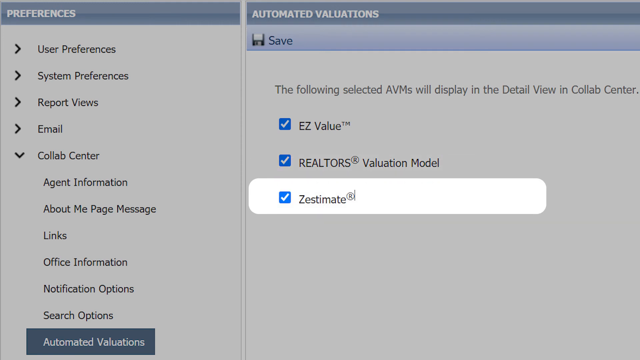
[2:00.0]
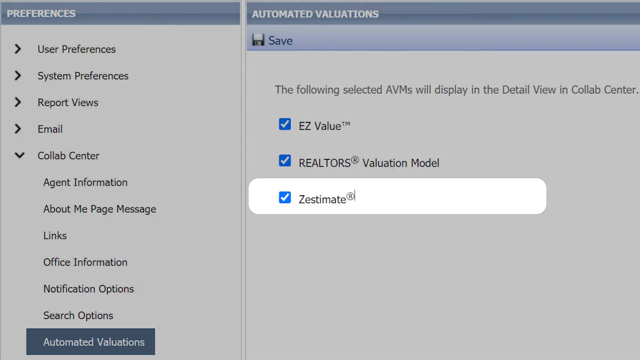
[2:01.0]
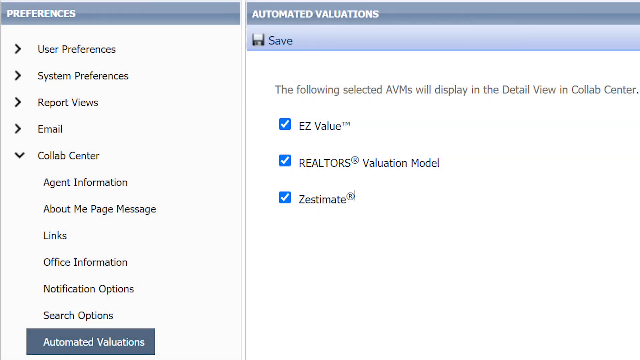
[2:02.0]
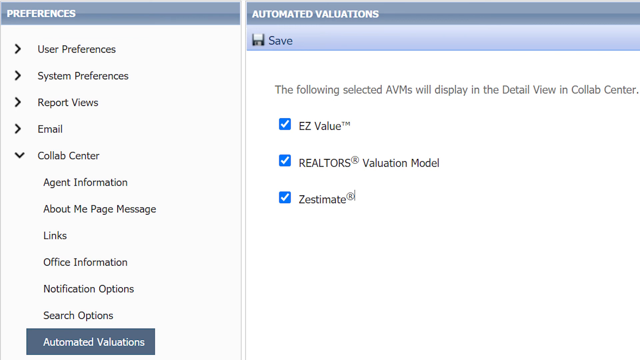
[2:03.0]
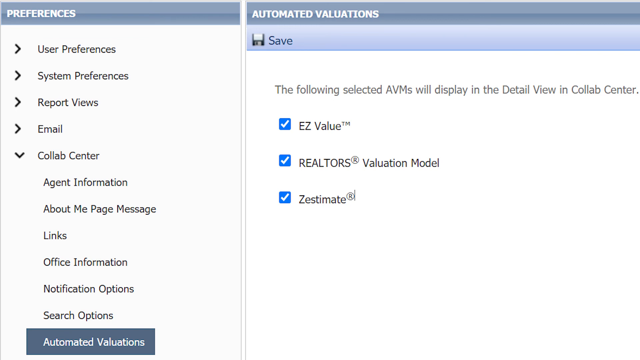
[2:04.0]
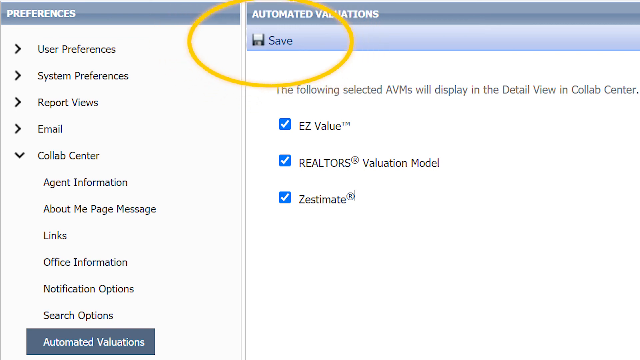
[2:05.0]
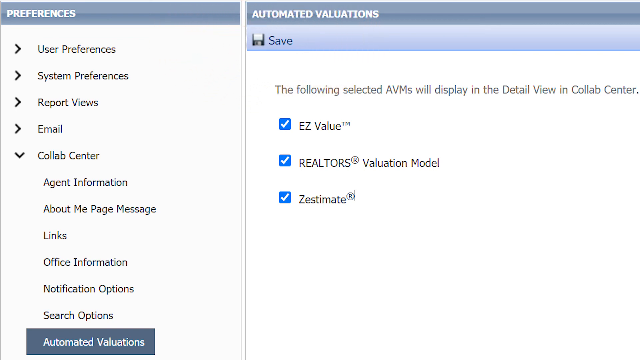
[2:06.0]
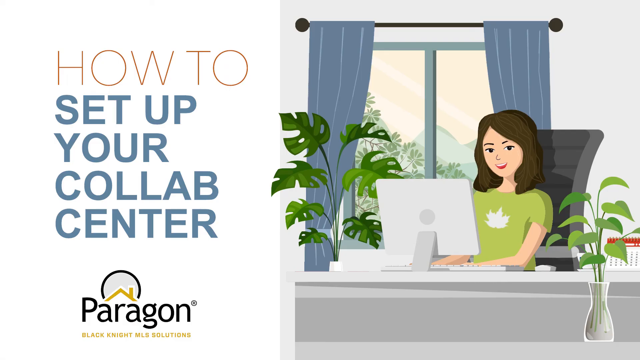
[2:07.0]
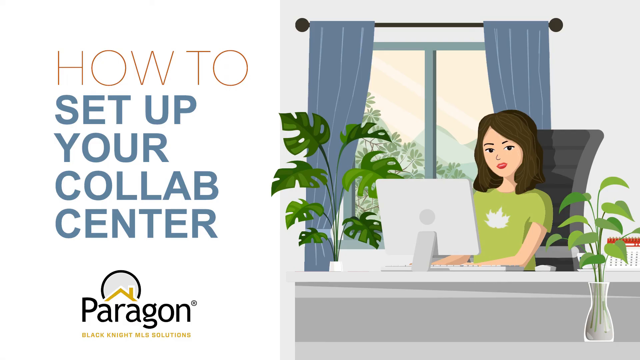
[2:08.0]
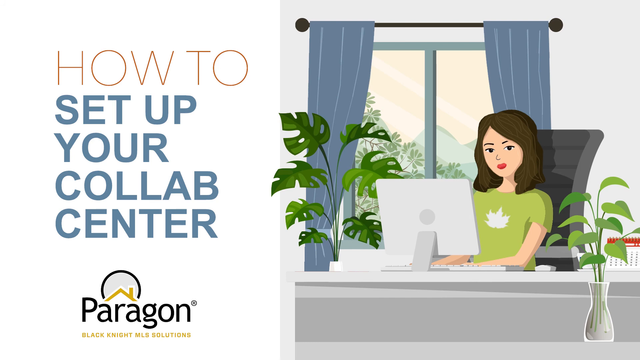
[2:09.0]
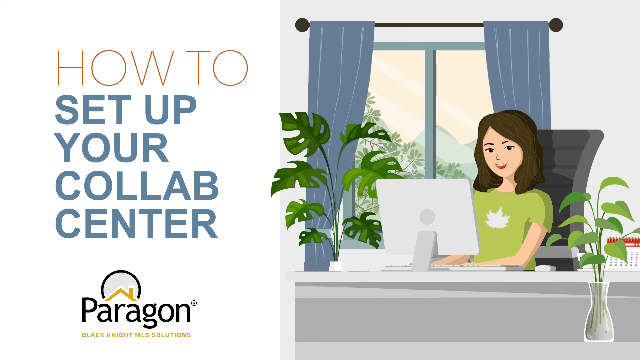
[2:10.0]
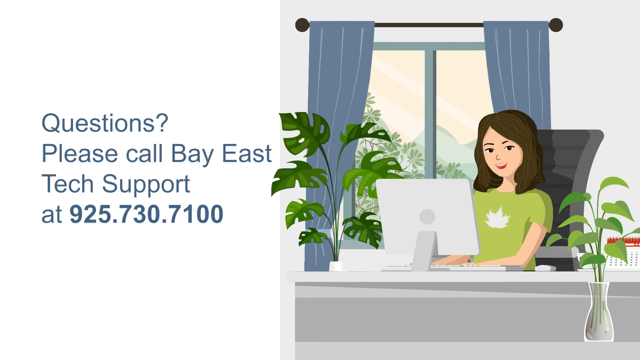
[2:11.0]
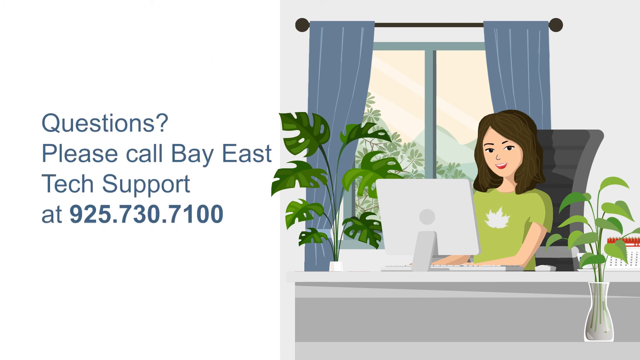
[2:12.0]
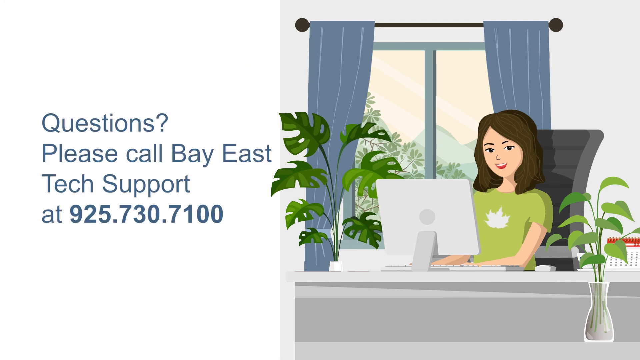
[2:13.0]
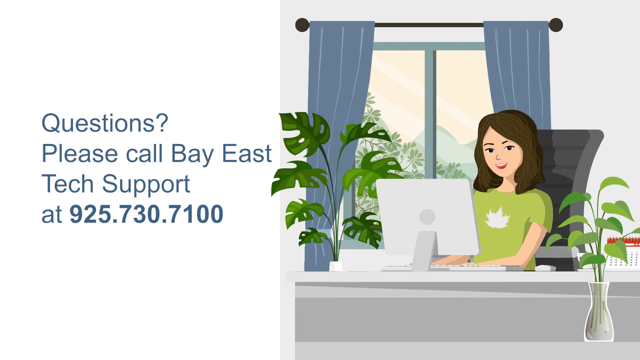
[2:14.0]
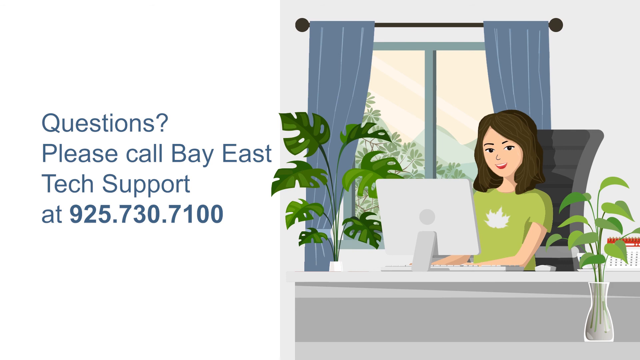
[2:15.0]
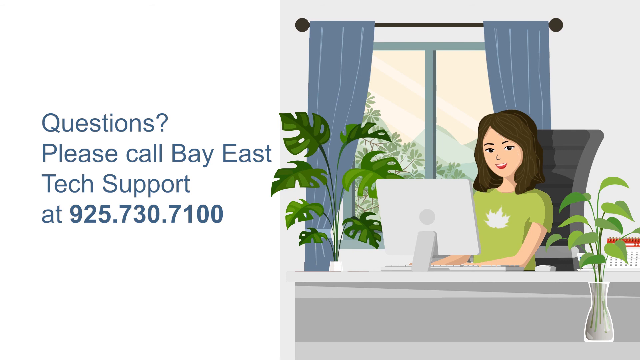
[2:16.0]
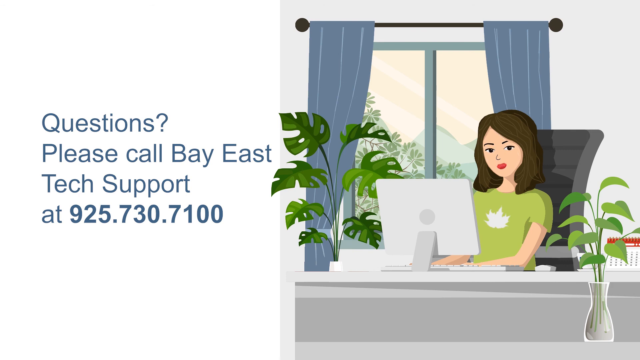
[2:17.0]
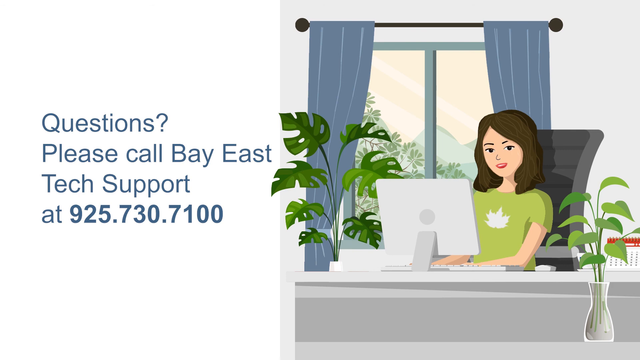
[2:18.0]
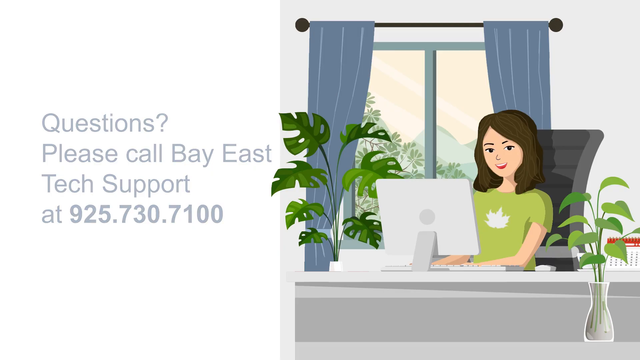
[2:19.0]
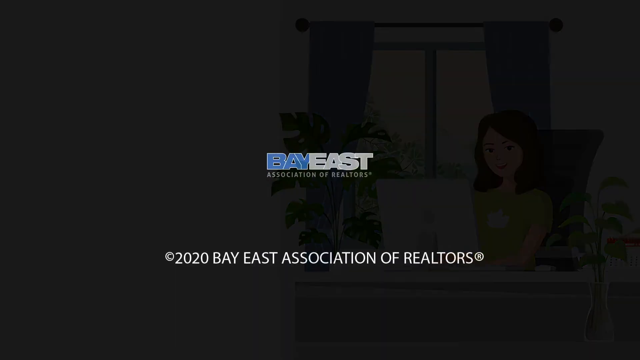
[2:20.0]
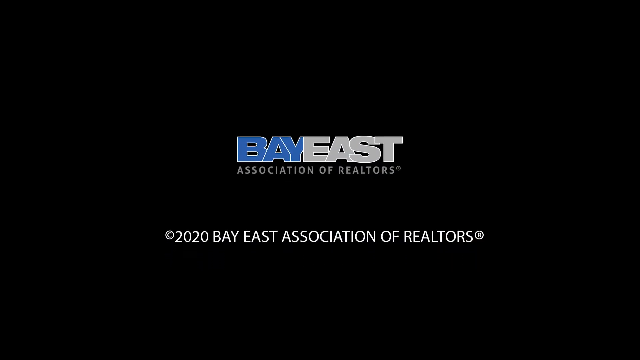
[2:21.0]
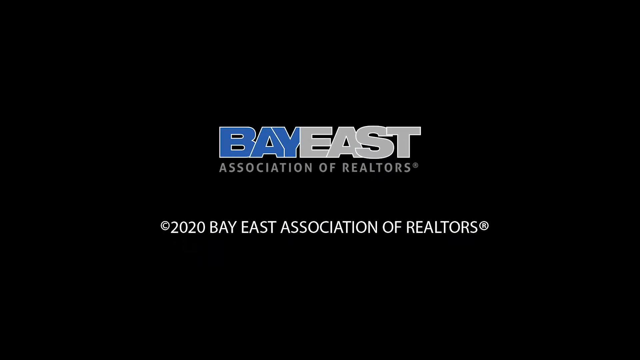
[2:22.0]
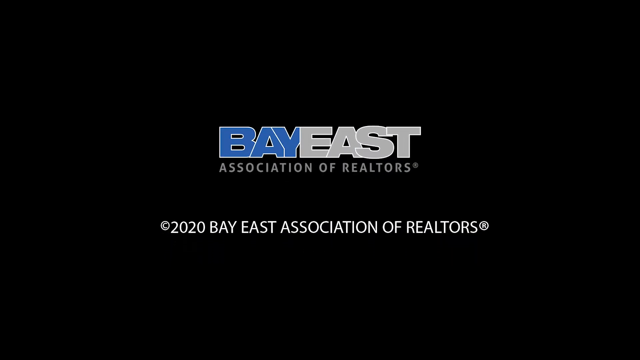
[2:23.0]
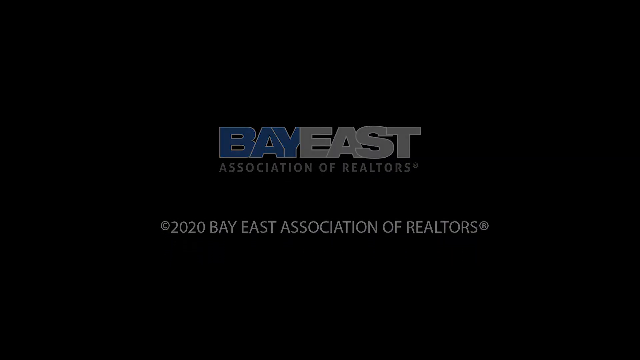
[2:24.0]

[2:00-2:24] The automated valuations screen is open, with the options EasyValue, Retailer's Validation Model, and ZestMate, all with check marks next to them. The user seems about to save; a yellow circle goes around the Save button, and it looks like Save is clicked. The video then returns to the animated cartoon lady, who has long brown hair and wears a green short-sleeved shirt with a white logo that looks like a leaf. She sits in front of a computer with a visible monitor and a white keyboard, next to an open window with blue drapes, and there are two plants in her office. A caption reads "how to set up your collab center", apparently by Paragon.